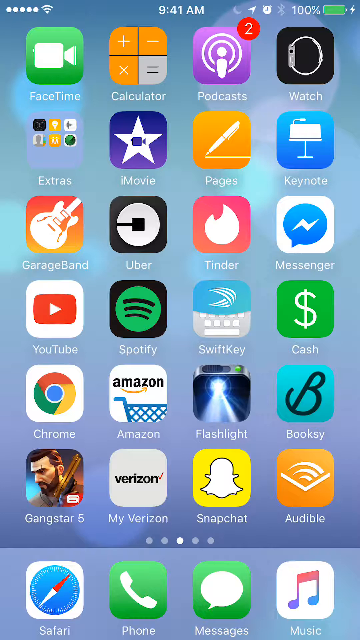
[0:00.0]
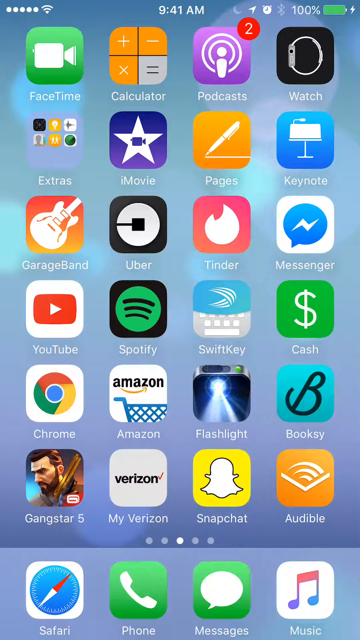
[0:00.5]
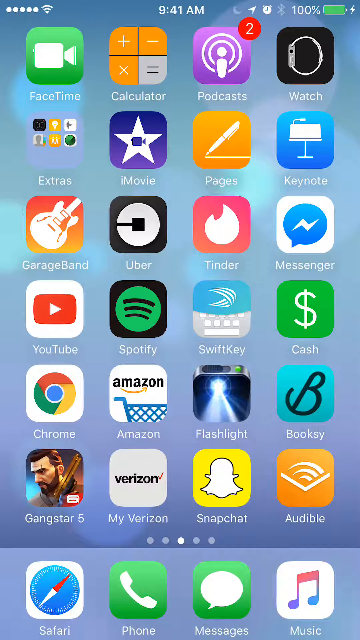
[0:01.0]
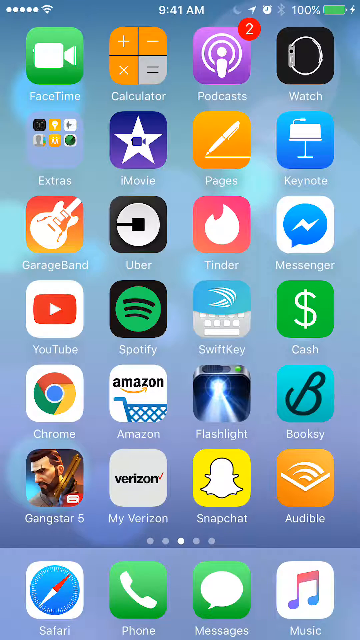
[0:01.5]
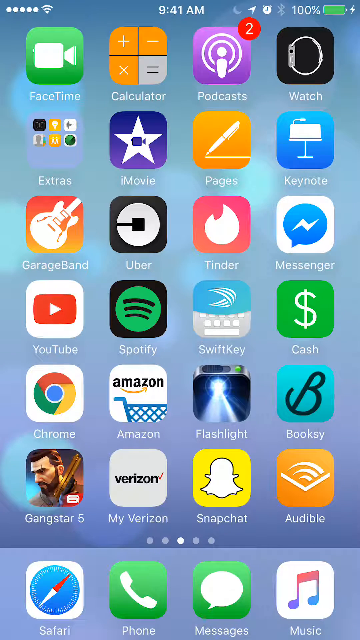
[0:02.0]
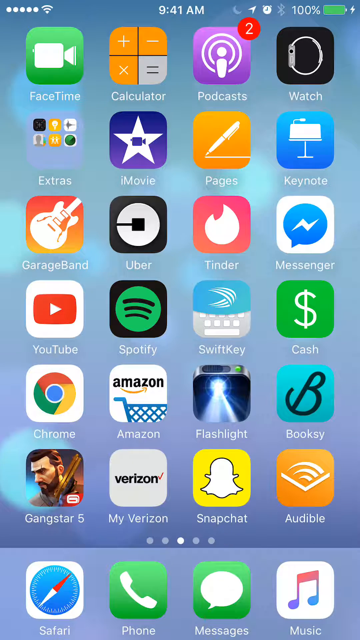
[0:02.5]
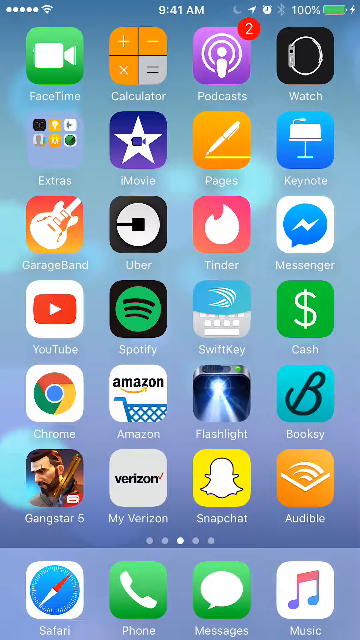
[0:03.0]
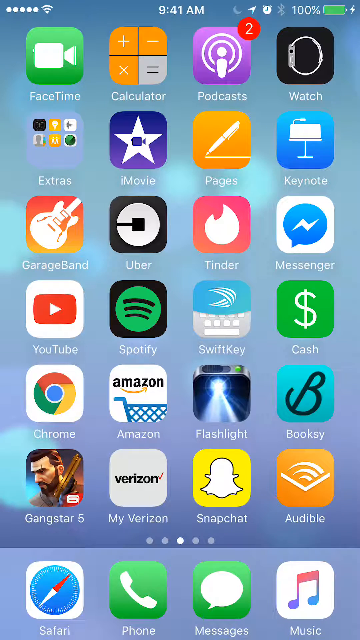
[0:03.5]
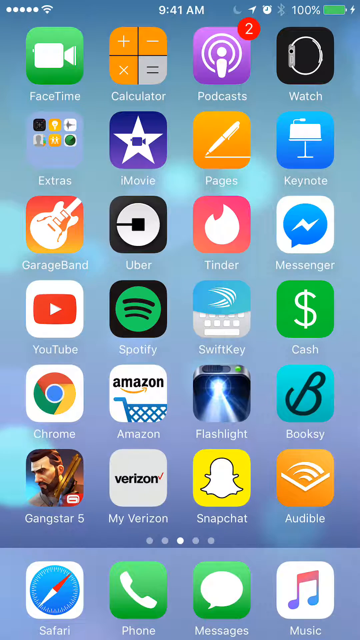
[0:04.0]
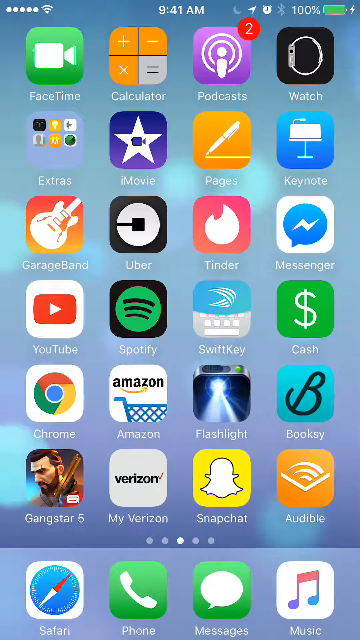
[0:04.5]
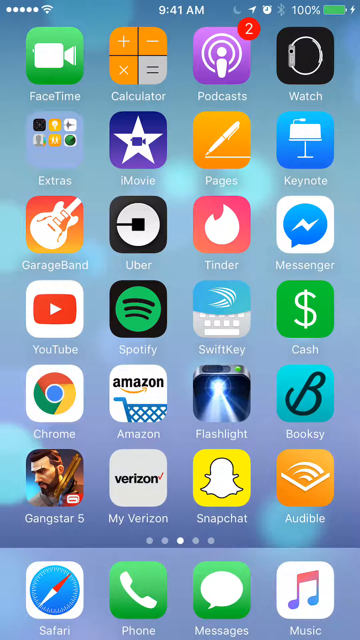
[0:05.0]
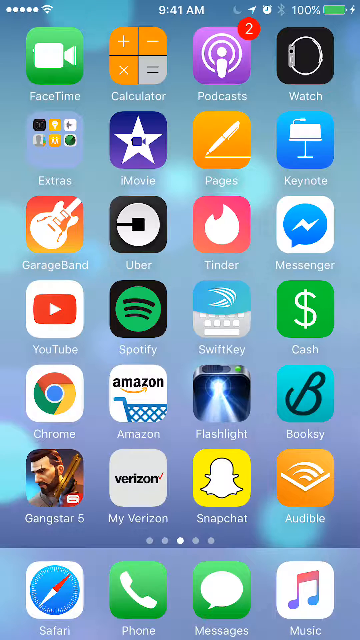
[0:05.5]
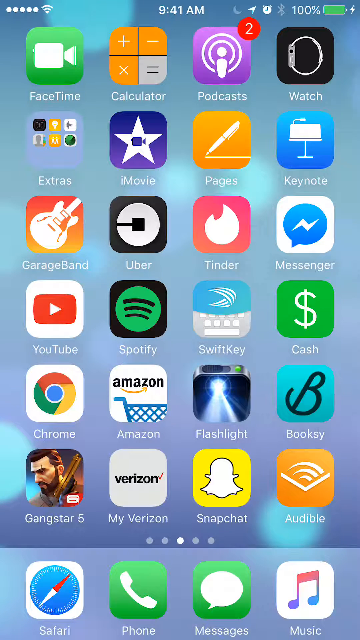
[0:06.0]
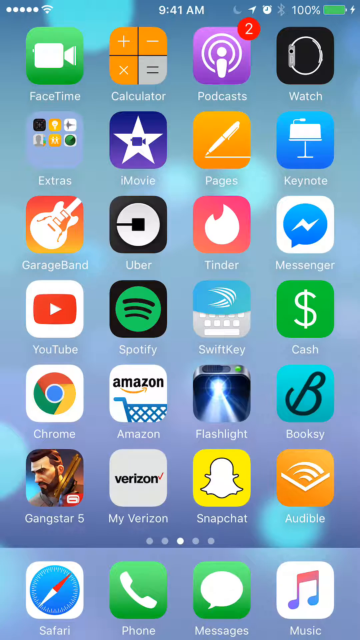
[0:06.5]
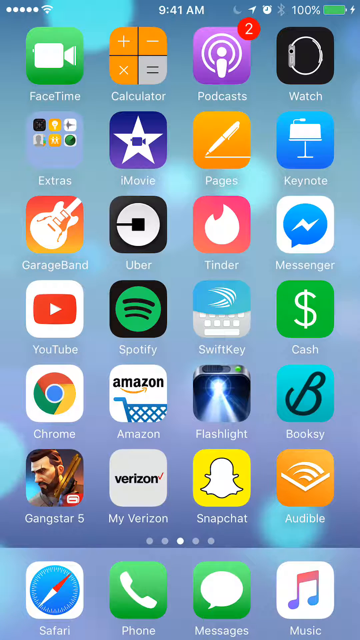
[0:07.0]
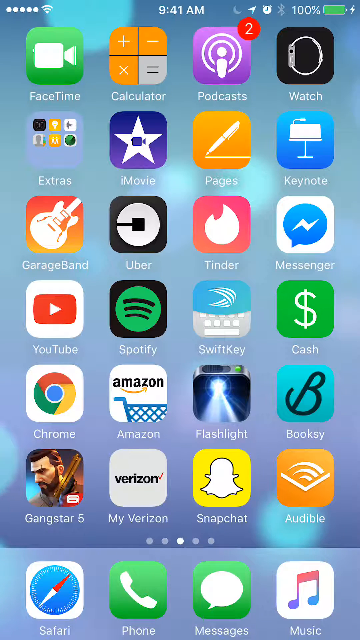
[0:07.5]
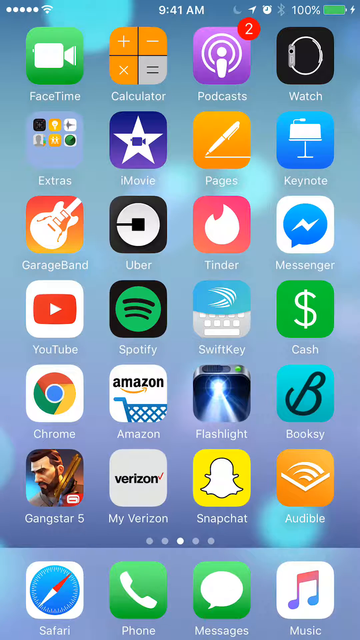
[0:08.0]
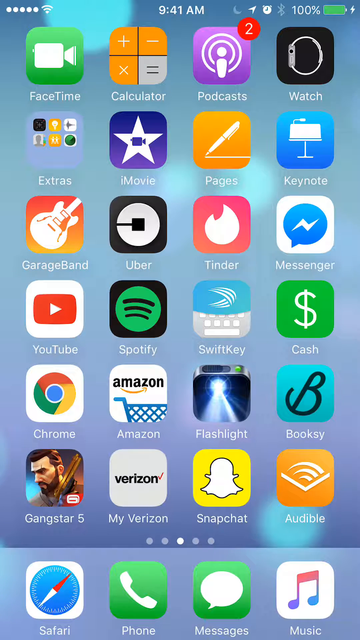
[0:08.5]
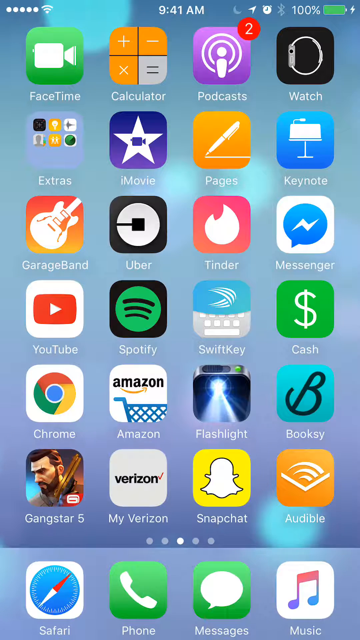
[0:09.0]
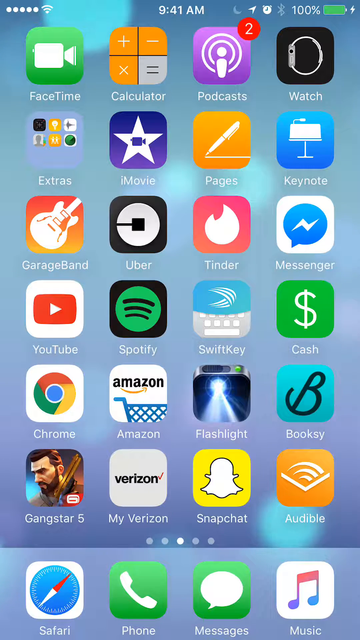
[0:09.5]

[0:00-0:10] The screen of a mobile device is shown, apparently an iPhone. It has a light blue background, the time shows 9:41 a.m., and the battery is at 100 percent. The whole screen is covered with different apps such as FaceTime, Calculator, Podcasts, Watch, Movie, Pages, YouTube, Chrome, Tinder, Amazon, Snapchat, Audible, Spotify, Messenger, Uber, GarageBand, a folder called "extras" containing a few other apps, and more. The bottom row of pinned apps shows Safari, Phone, Messaging and iTunes. Five pagination circles indicate there are five different screens.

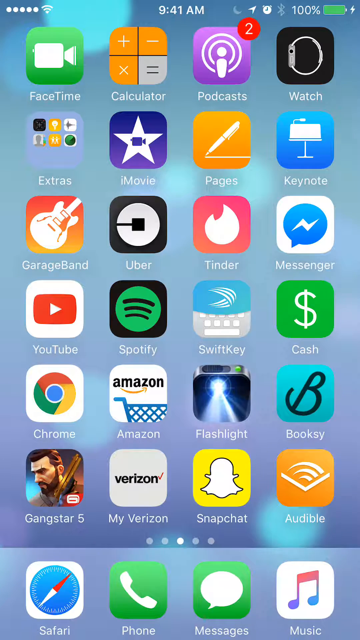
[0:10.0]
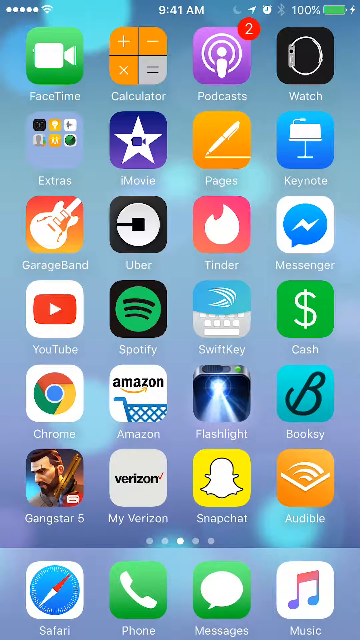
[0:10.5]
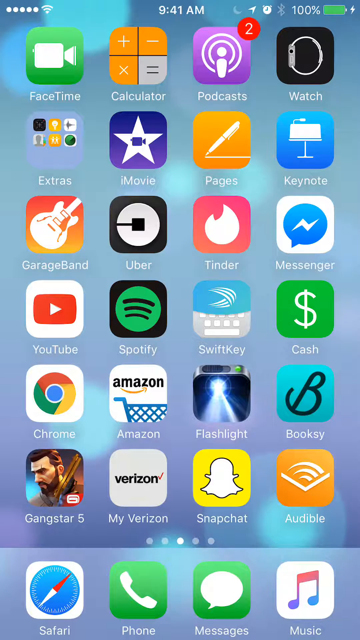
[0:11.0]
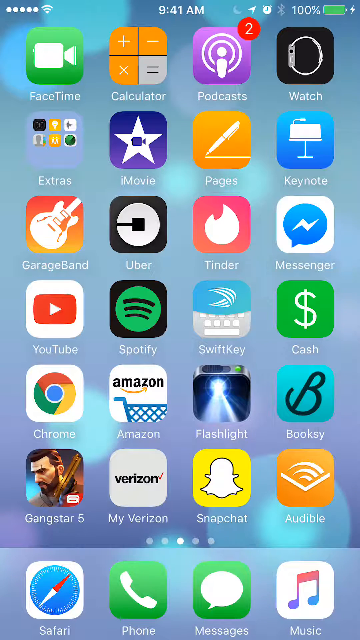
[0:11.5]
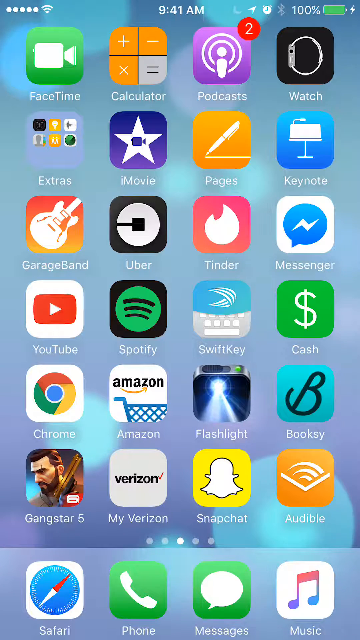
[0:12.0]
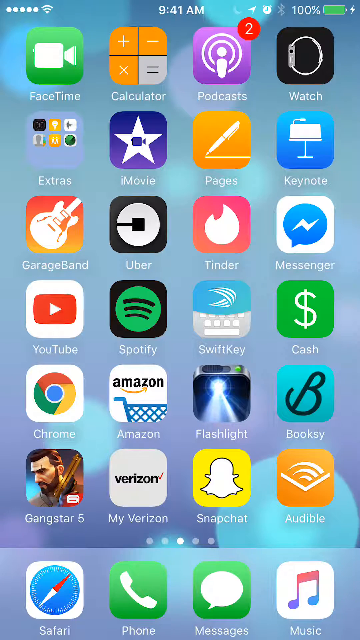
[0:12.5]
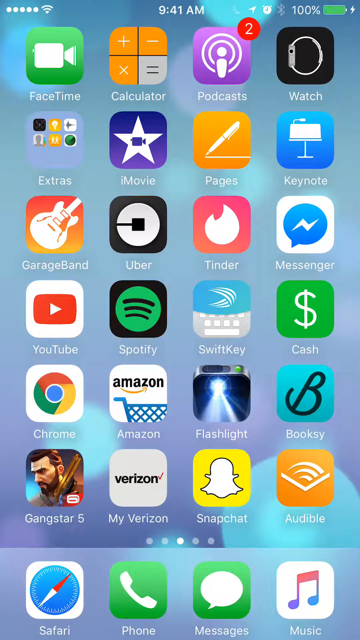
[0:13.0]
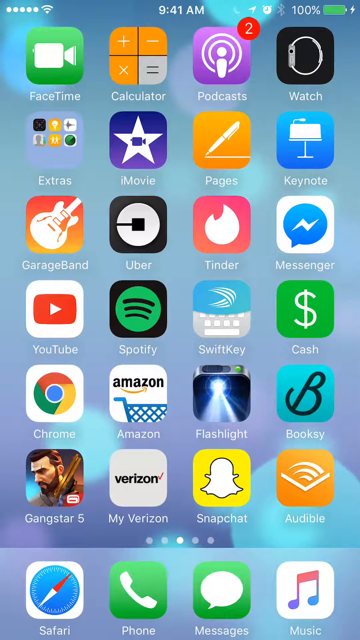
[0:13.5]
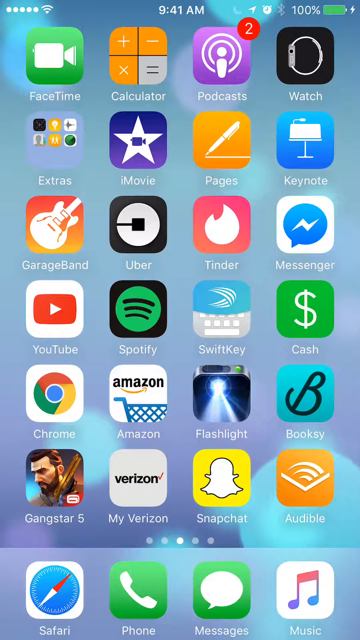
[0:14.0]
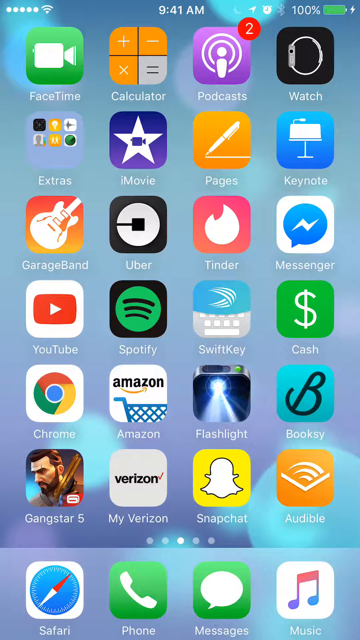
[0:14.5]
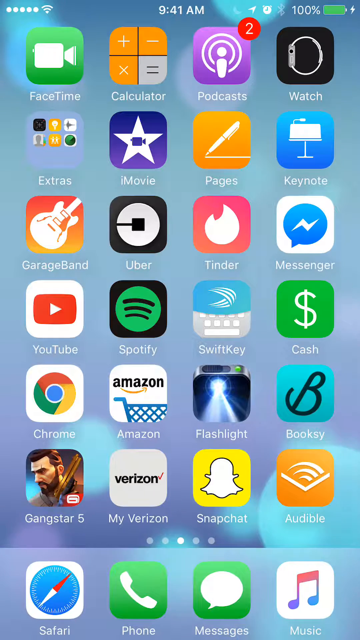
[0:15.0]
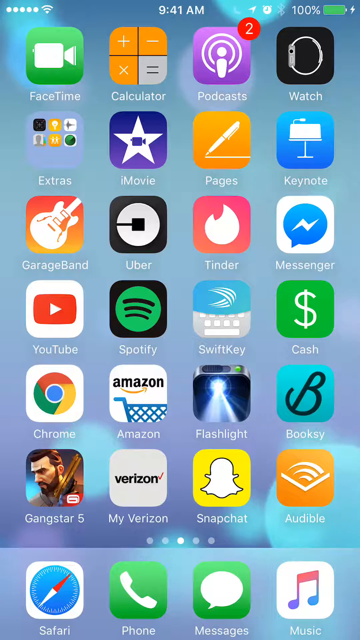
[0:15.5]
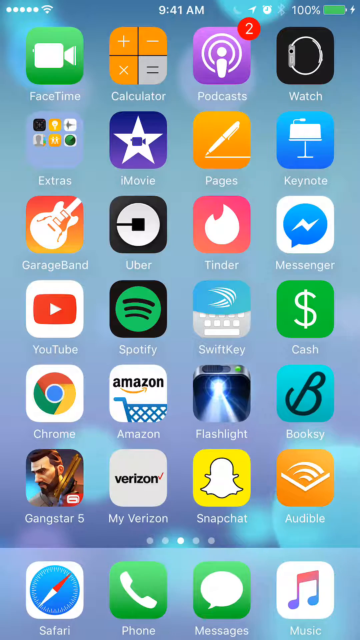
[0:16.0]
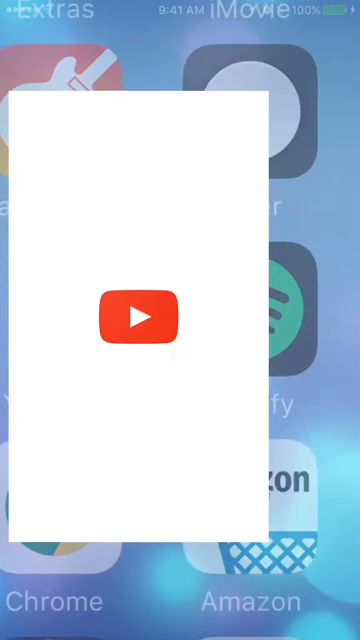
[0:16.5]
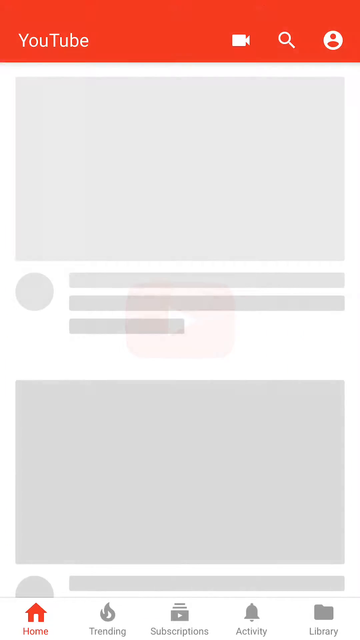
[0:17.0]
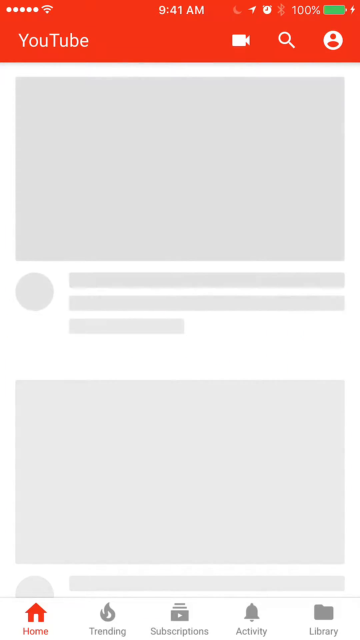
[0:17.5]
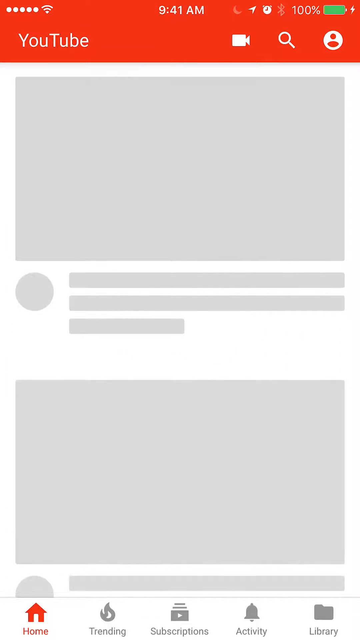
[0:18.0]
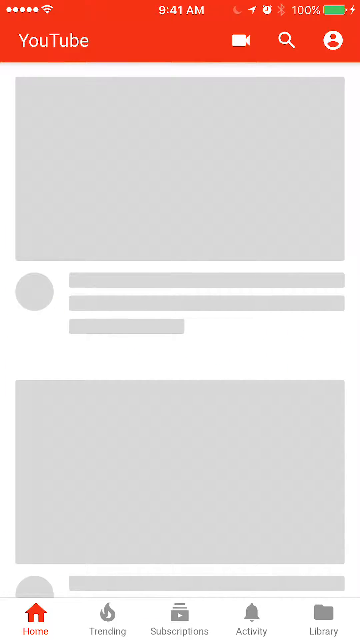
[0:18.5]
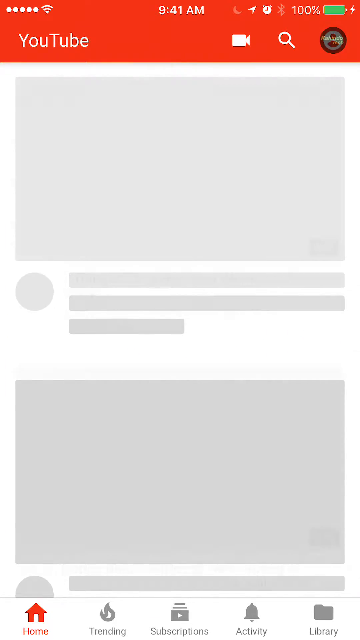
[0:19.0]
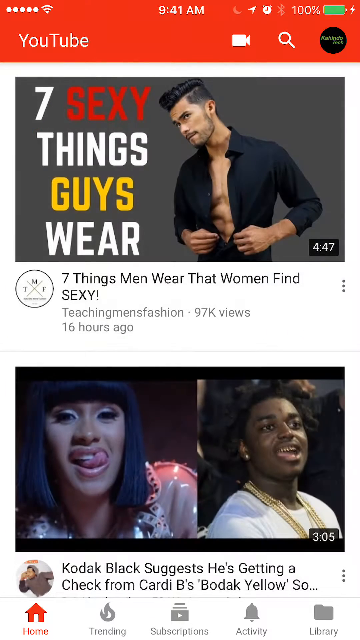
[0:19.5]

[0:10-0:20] The screen of a mobile device, seemingly an iPhone, has a light blue background with a gradient that kind of fades to a lighter purple toward the bottom. The whole screen is covered with icons for apps such as FaceTime, Calculator, Podcasts, YouTube, Spotify, Tinder, Uber, Amazon, Chrome, Snapchat and many more. The YouTube app is selected and opens, showing two preview videos: one shows a guy unbuttoning a black button-down shirt and says "seven sexy things guys wear", and the one underneath shows rappers Cardi B and Kodak Black.